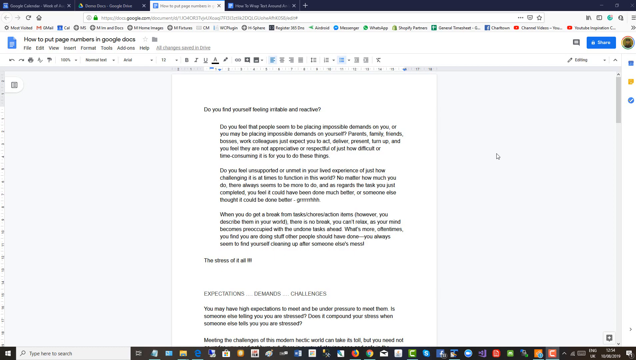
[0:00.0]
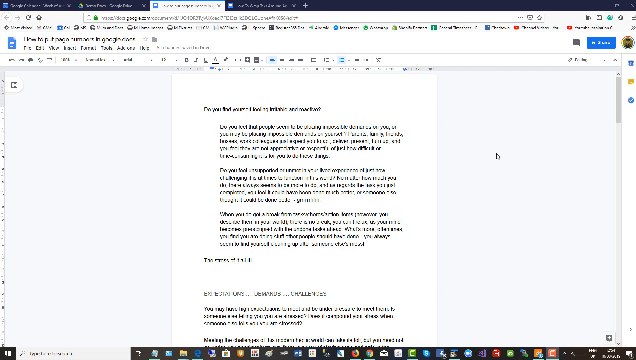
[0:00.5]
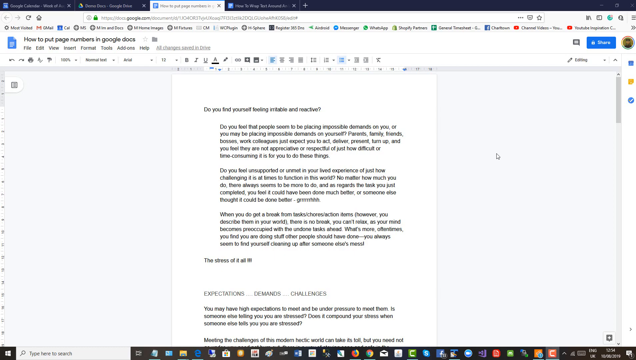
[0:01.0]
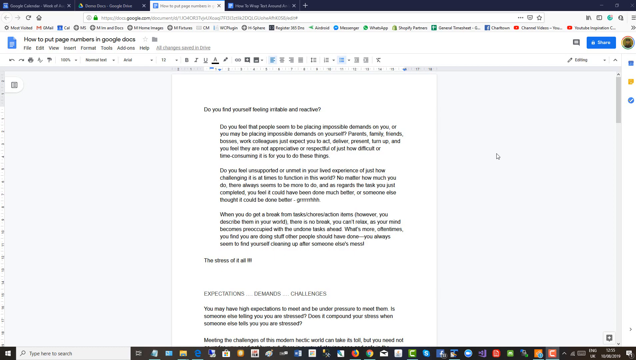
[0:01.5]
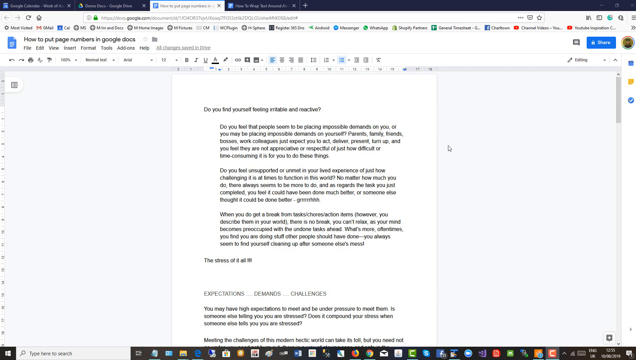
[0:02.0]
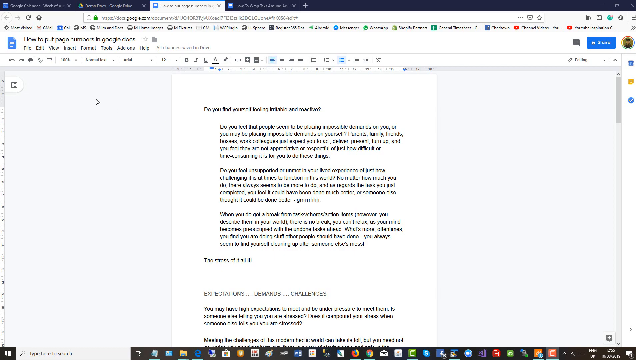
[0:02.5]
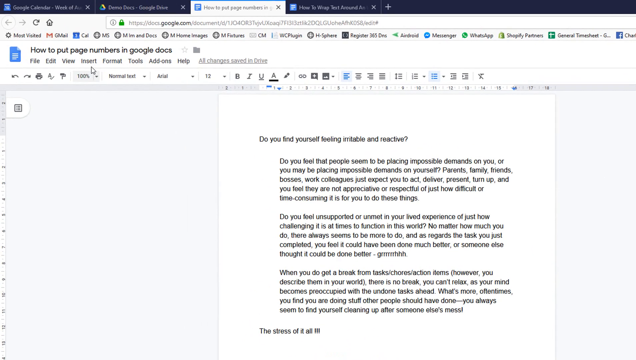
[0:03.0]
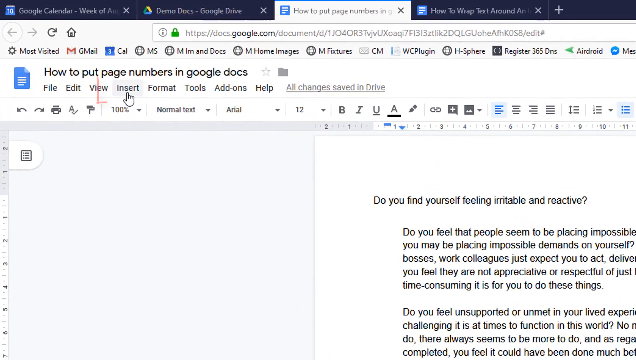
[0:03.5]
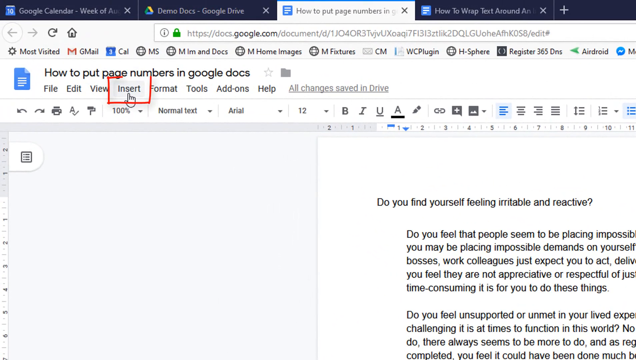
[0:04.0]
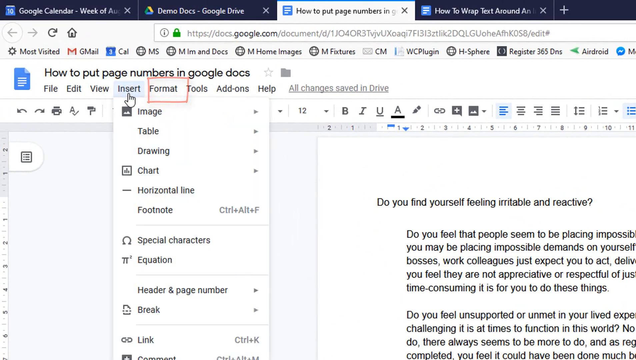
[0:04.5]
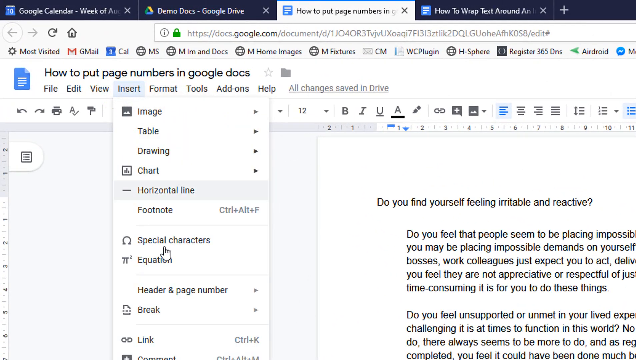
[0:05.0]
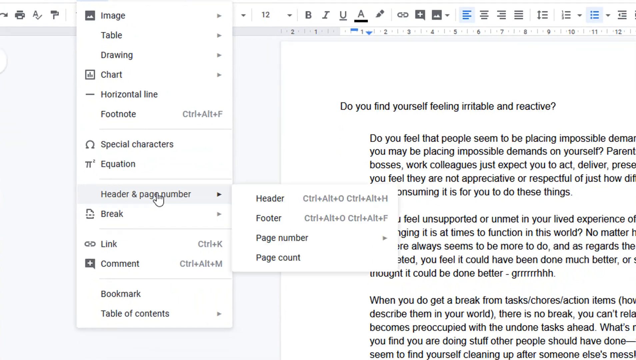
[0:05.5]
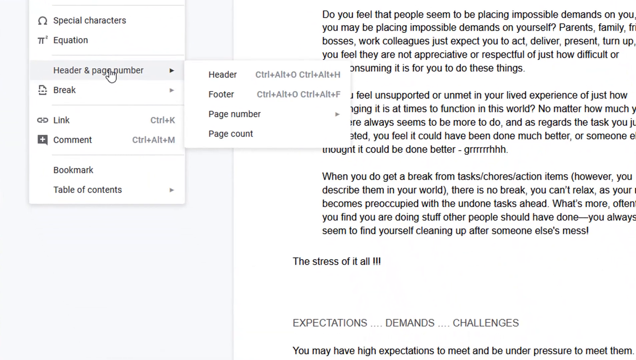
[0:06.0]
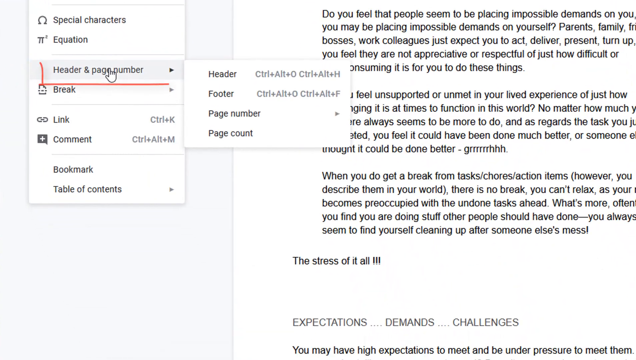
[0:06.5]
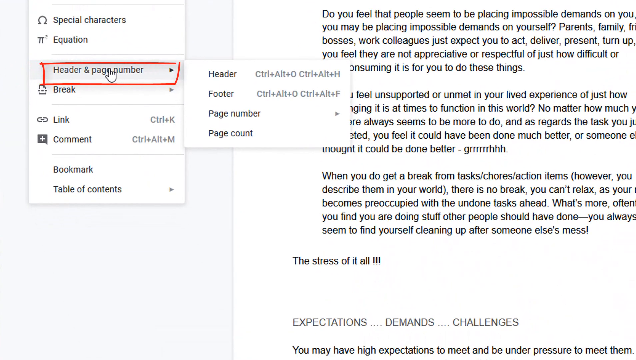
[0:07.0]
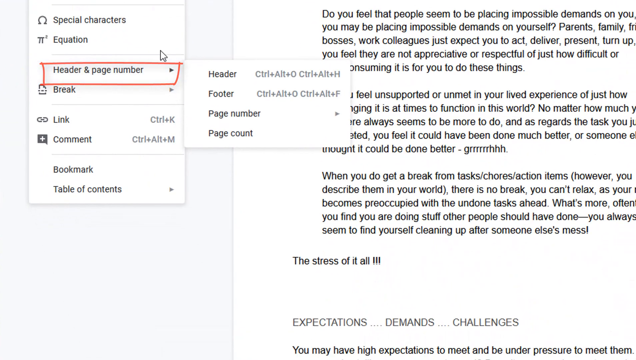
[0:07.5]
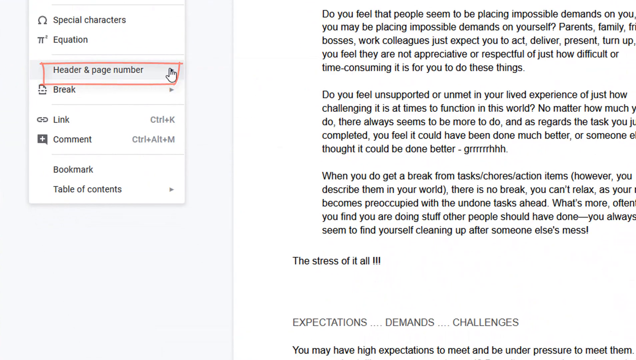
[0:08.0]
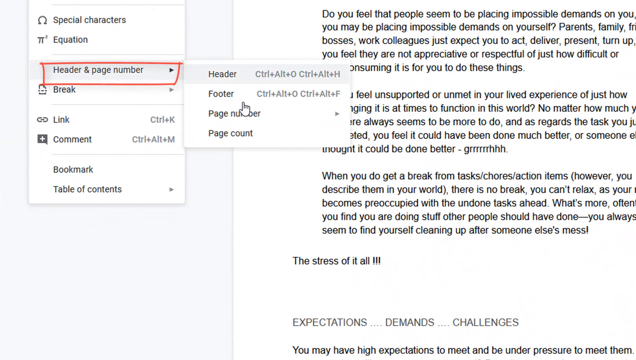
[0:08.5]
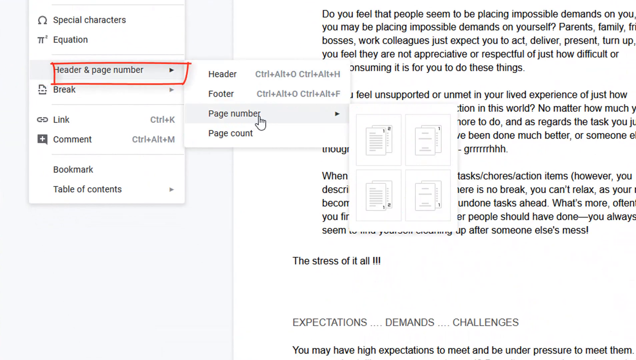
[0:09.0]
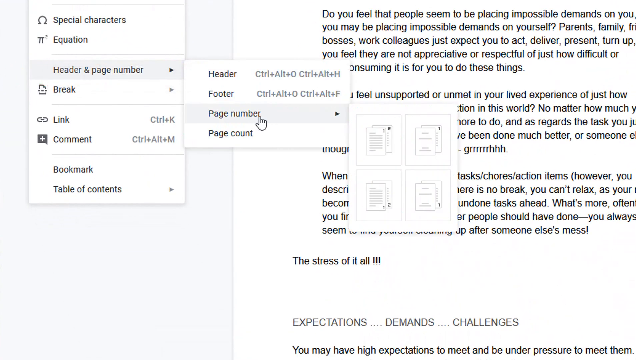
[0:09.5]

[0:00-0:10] A screen recording shows a Google Docs platform, where a person is editing a Google Docs document. The person is trying to add a page number and a header, so they go to the edit tab, where the page number and header options are found, and successfully enter the header or page number option. The document seems to be some sort of short story, possibly research. Everything is displayed in a normal Google Docs manner, and about four tabs are open in the browser.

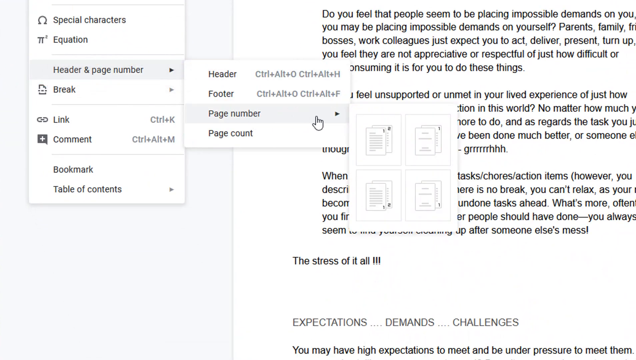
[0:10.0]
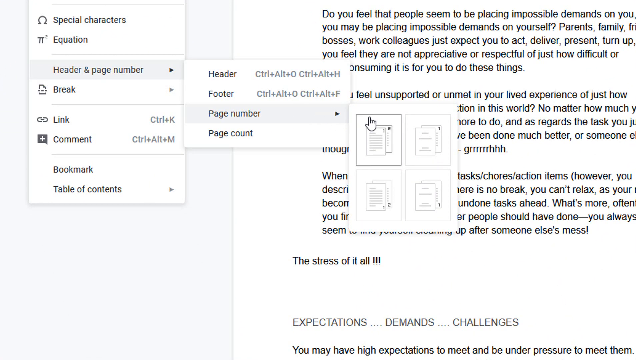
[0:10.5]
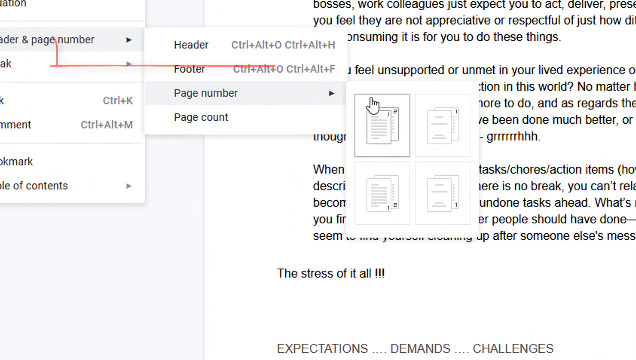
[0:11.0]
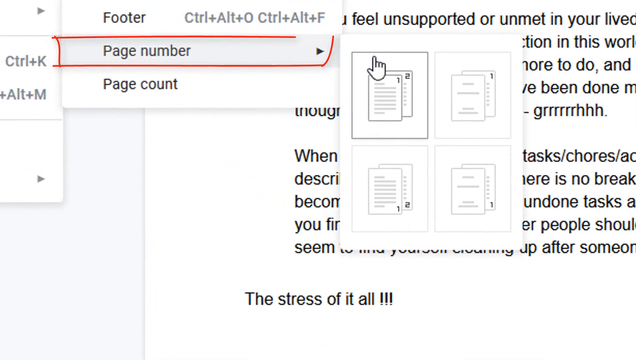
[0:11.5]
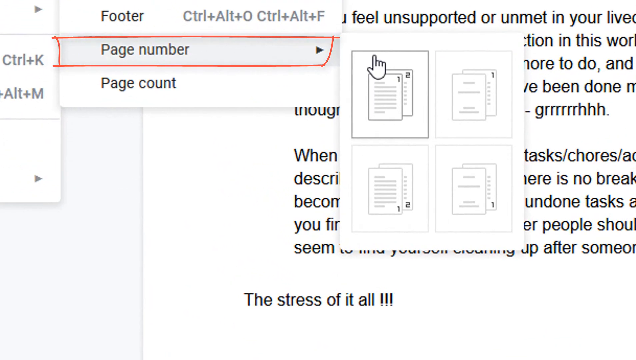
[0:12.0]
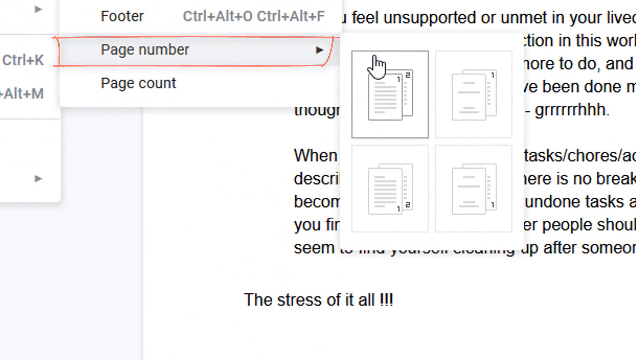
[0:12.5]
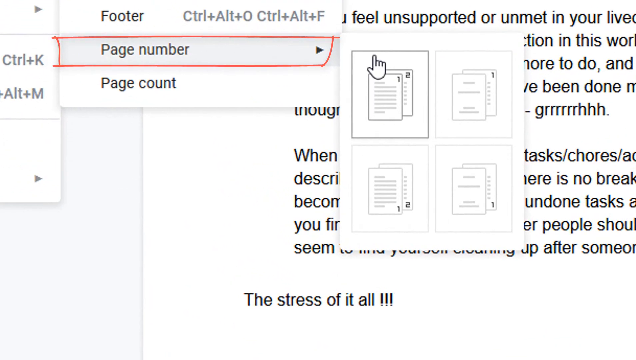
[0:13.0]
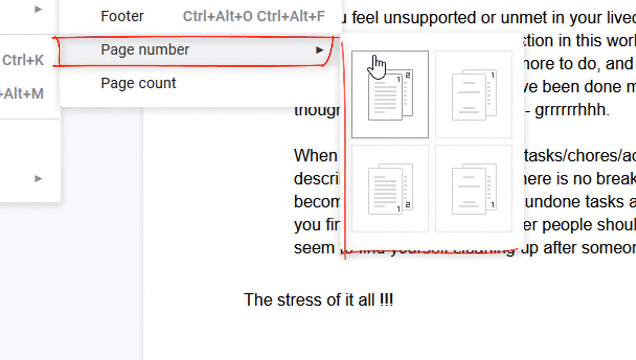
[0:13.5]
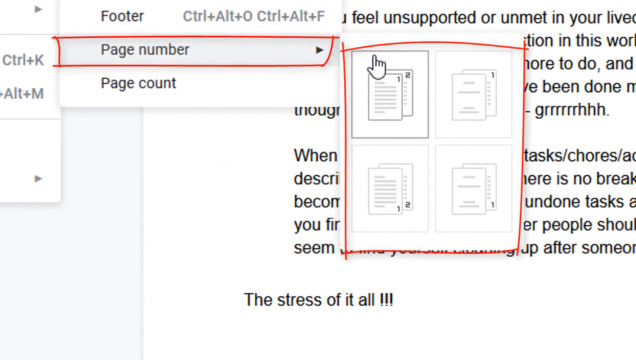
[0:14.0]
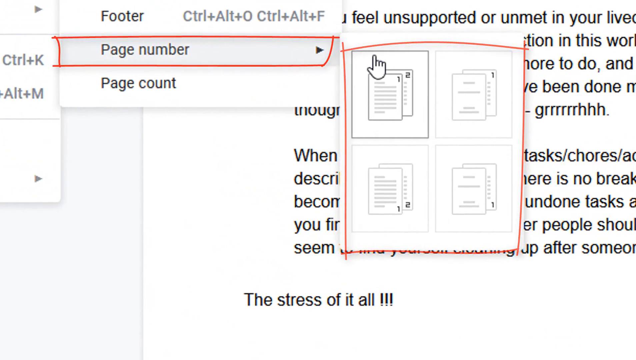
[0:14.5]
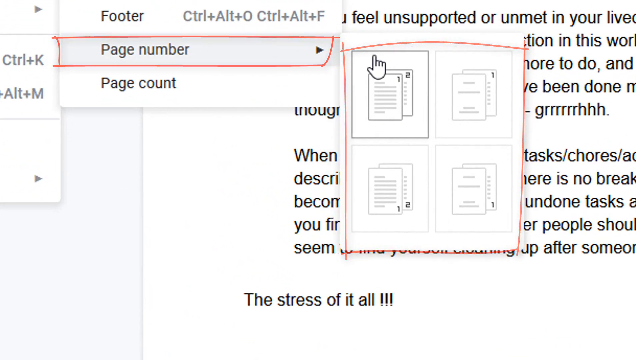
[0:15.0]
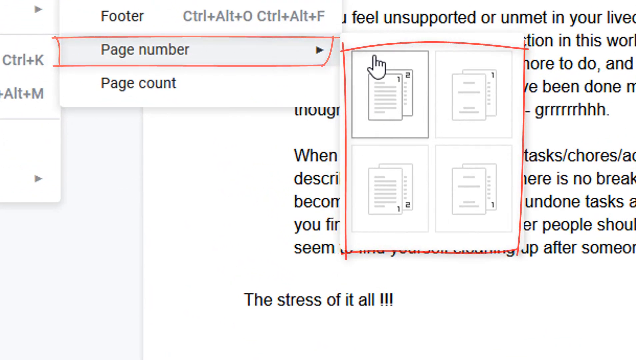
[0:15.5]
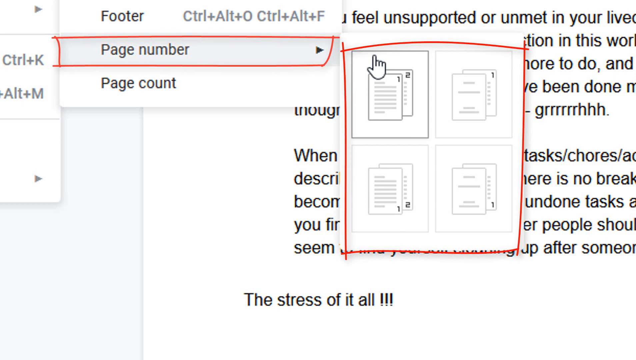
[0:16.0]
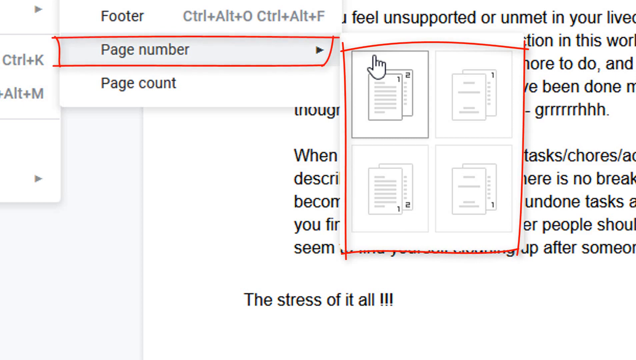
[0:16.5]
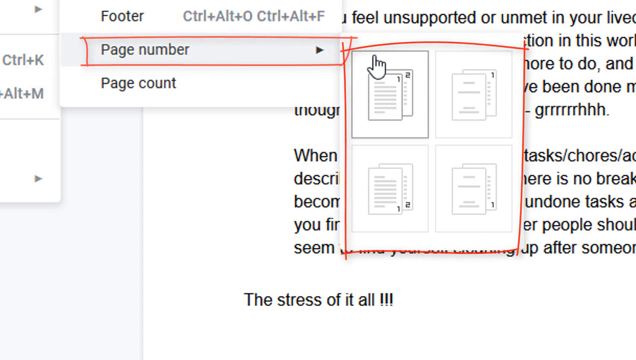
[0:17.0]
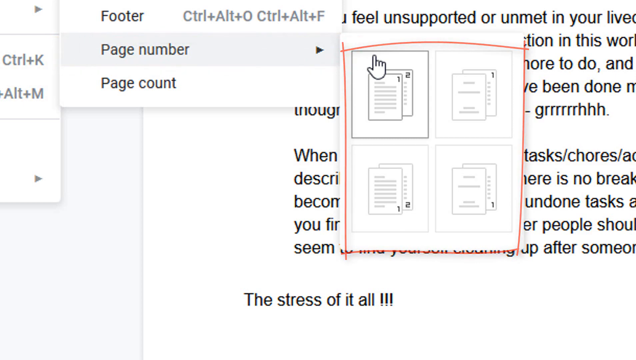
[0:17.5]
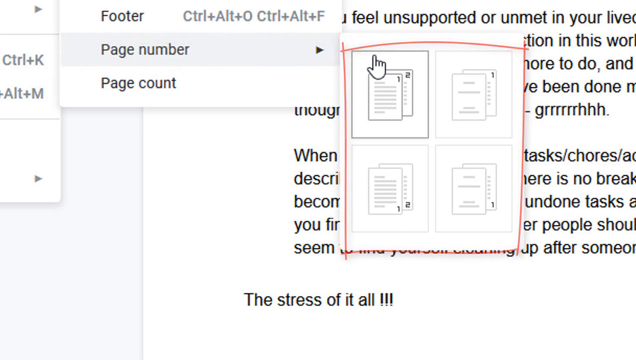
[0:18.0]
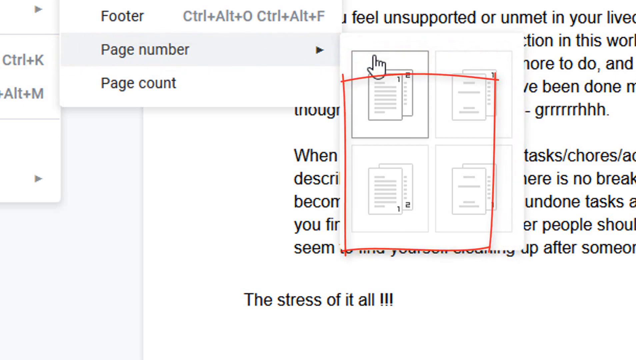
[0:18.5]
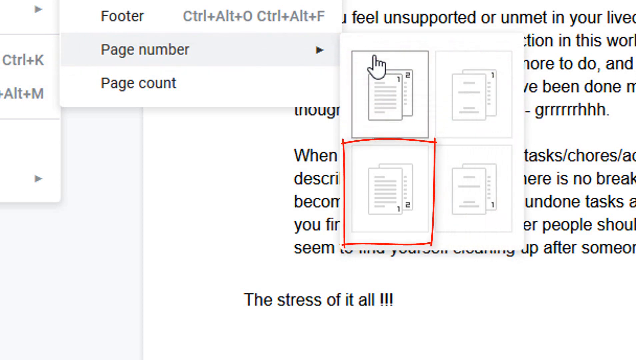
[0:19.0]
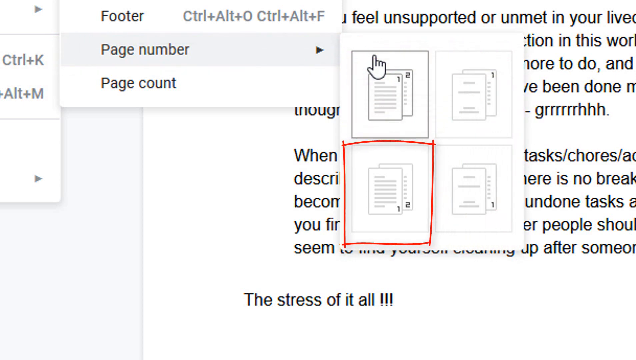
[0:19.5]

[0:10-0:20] The screen recording appears to be a tutorial on how to put page numbers on a document. The person shows how to add a page number to a document in Google Docs. Options appear, including special characters, equation, and header and page number; within the header and page number option, the person chooses page number.